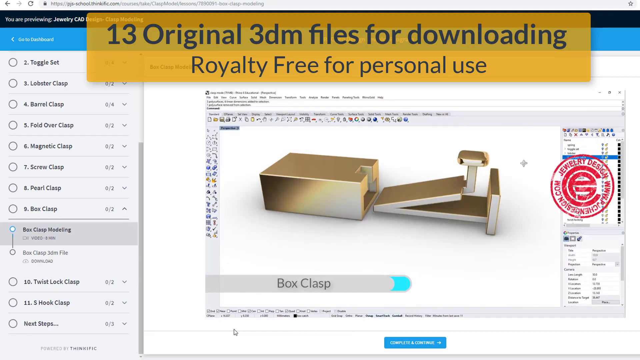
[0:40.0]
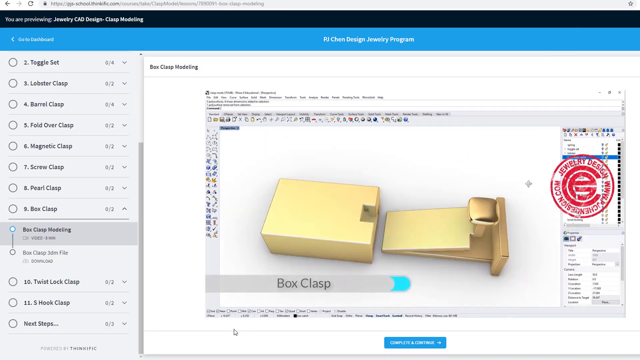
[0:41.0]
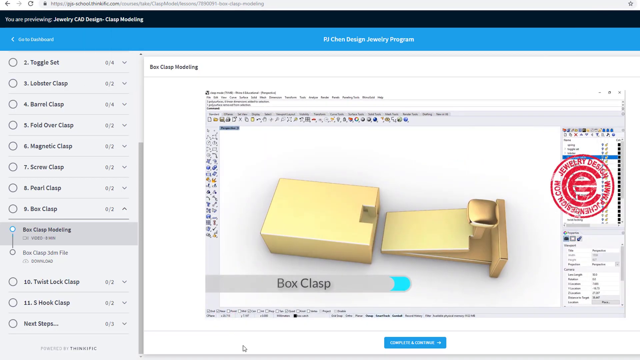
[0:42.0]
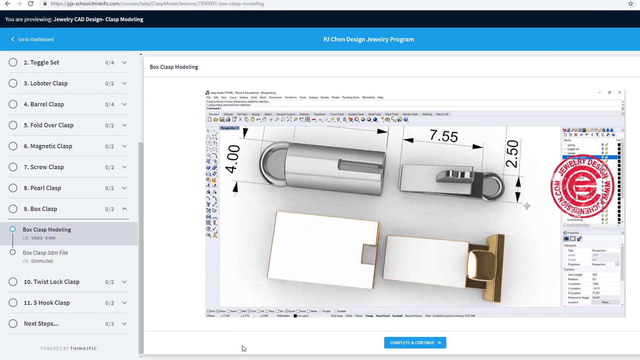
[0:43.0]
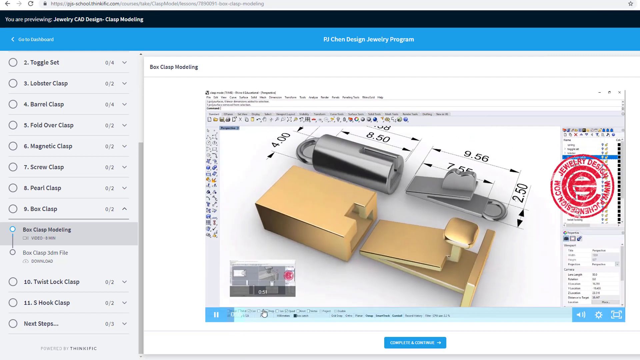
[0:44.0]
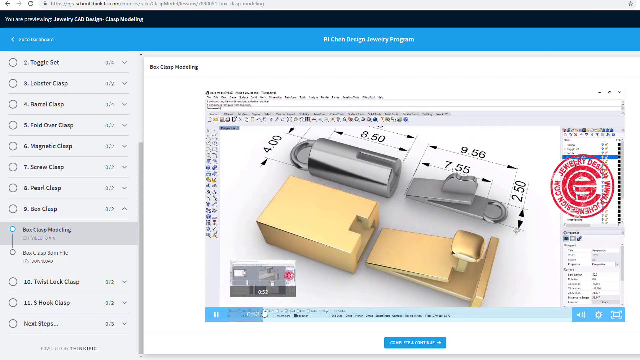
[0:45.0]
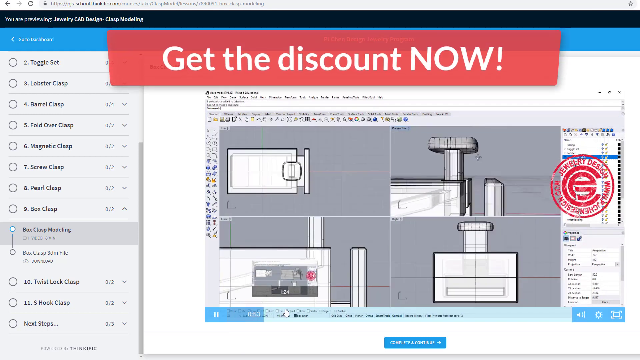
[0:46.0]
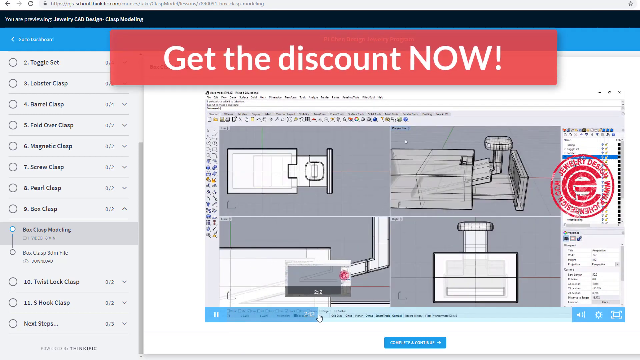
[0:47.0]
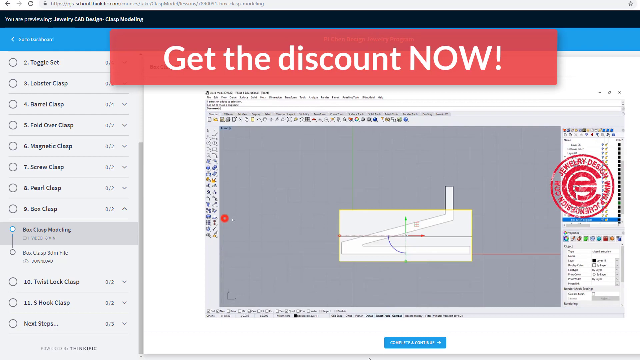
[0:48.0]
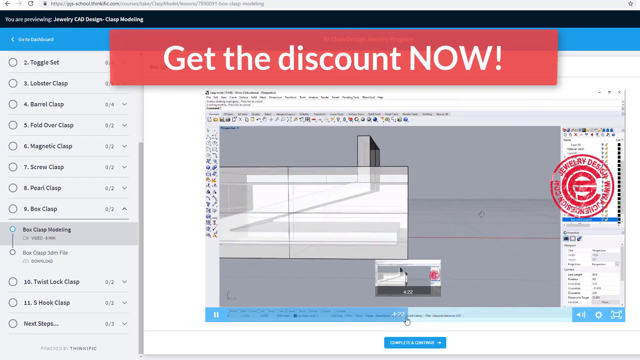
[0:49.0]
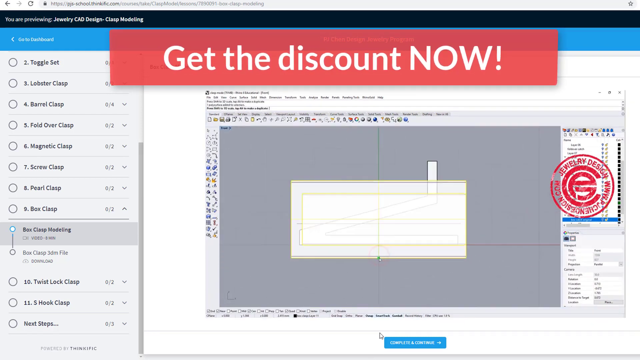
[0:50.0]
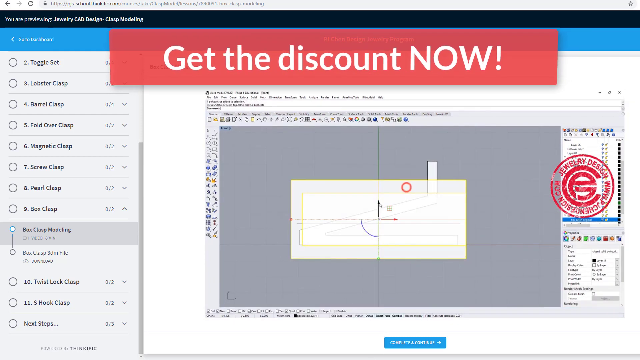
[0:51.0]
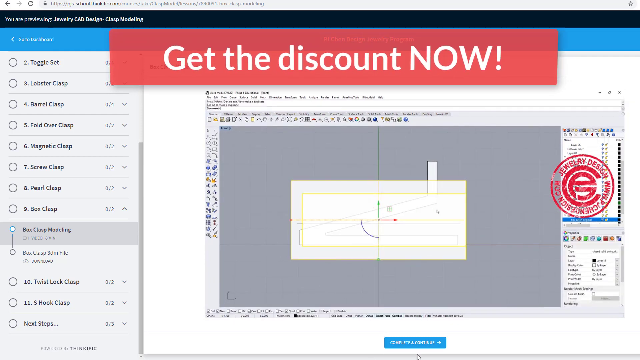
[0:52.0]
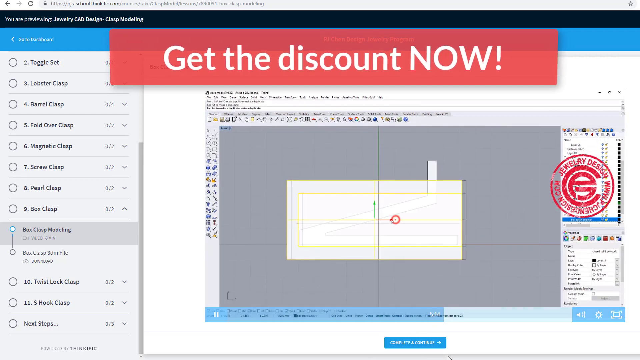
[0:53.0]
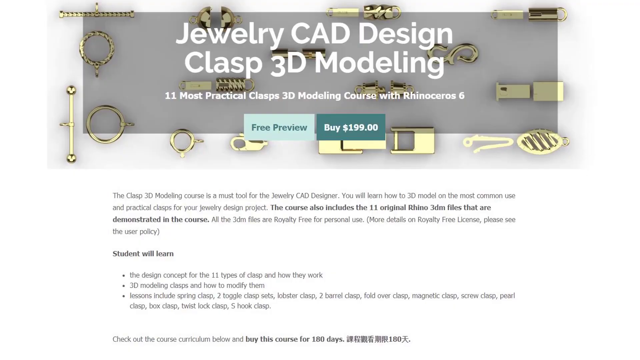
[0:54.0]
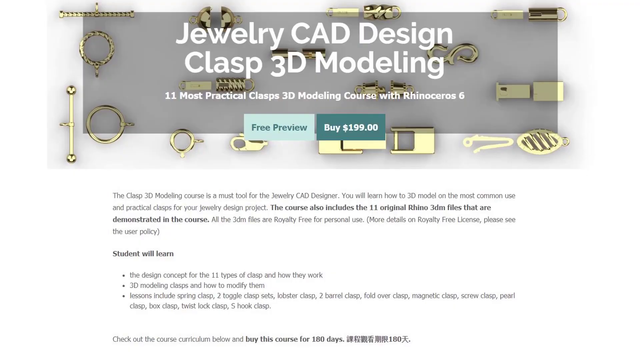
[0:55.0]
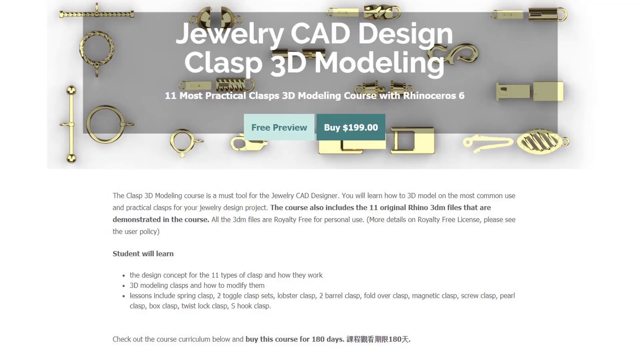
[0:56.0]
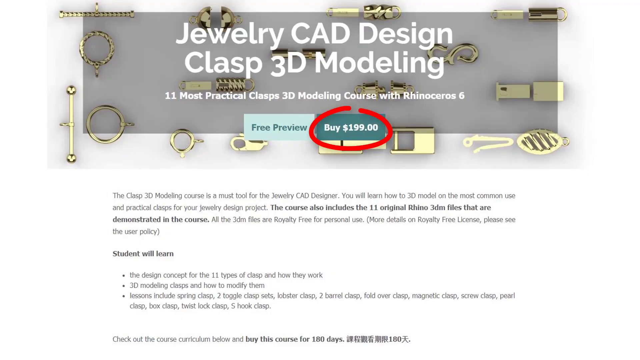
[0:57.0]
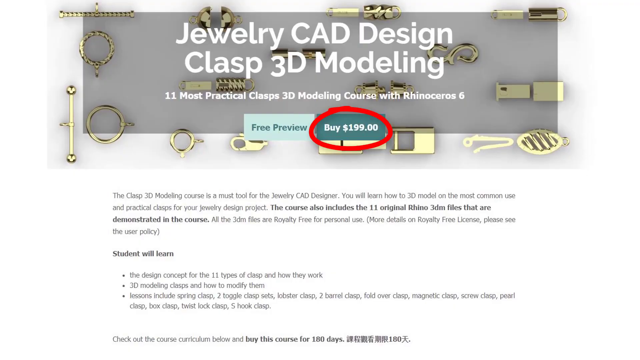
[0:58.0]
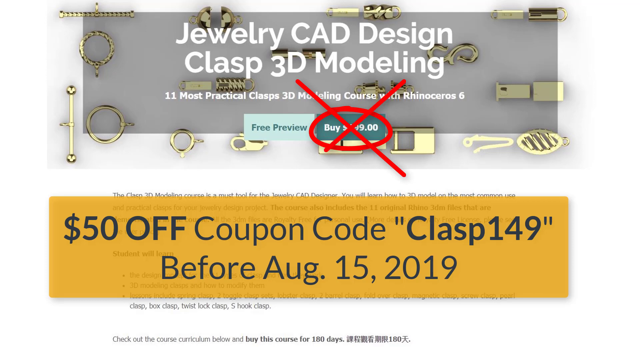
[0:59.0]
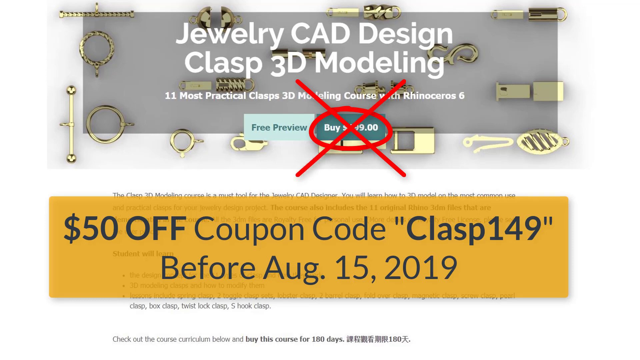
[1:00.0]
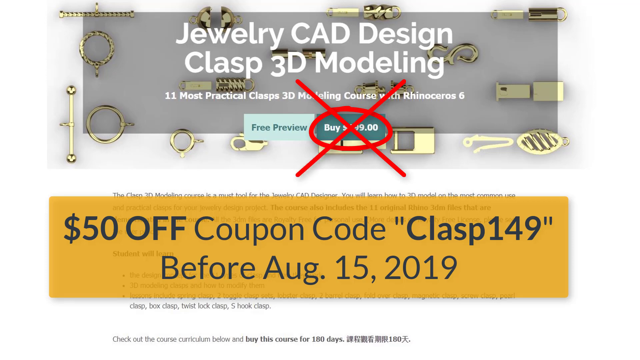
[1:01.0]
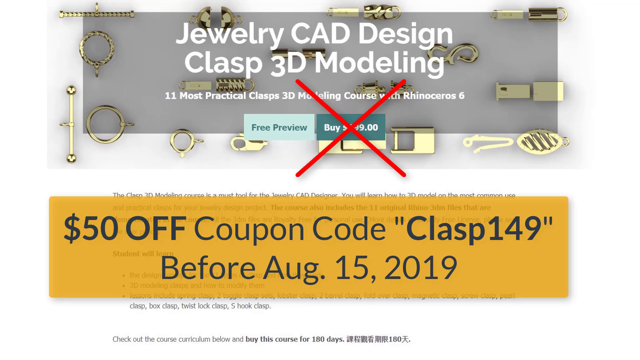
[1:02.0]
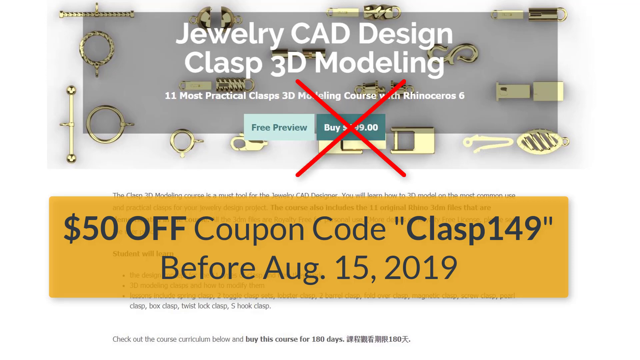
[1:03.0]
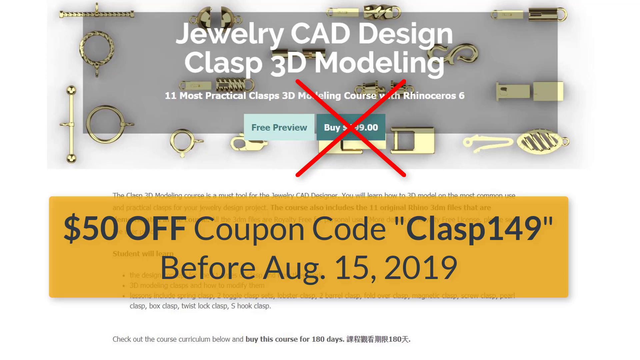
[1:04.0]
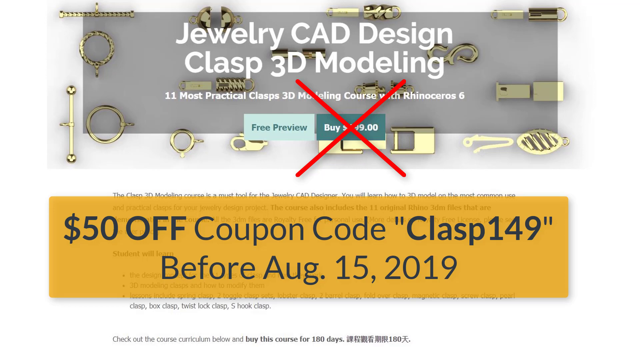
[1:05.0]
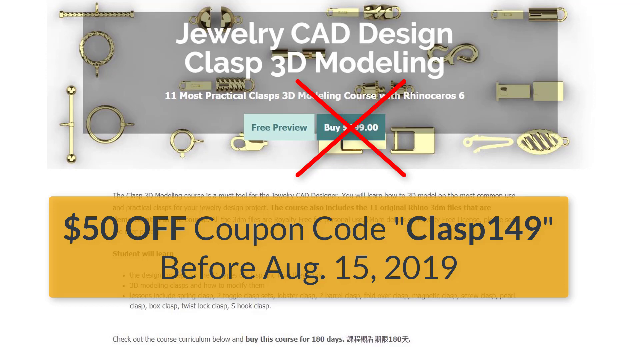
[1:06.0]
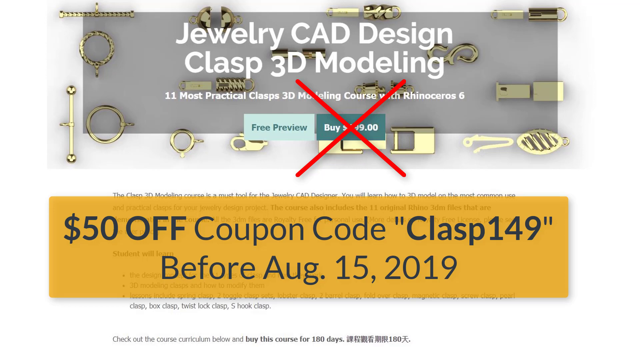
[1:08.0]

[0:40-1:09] A box clasp is featured in the center of the screen in a 3D rendering program. On the left, the radio button options read two toggle set, three lobster clasp, four barrel clasp, five fold-over clasp, six magnetic clasp, seven screw clasp, eight pearl clasp and nine box clasp. Underneath are a few other options: "box clasp modeling," "box clasp 3DM file," then 10 twist lock clasp and 11 S-hook clasp, and the last radio button reads "next steps." In the center, the box clasp 3D model is rotated around as someone uses the mouse pointer to drag the image, showing the clasp from different angles. Text reads "get the discount now." The view changes to a screen reading "jewelry CAD design clasp 3D modeling, 50% off coupon code CLASP149 for August 15, 2019." In the middle of the screen are a free preview button and a buy for $199 button; the $199 button is circled in red and then crossed out with a red X.